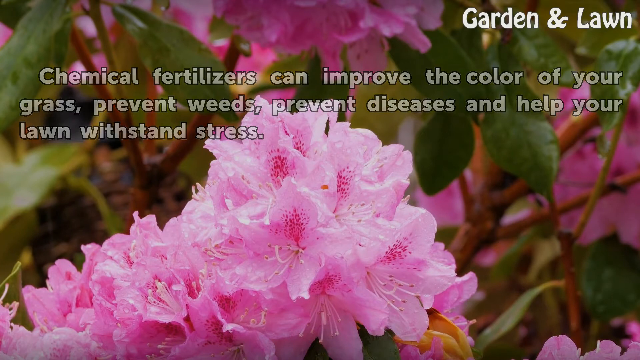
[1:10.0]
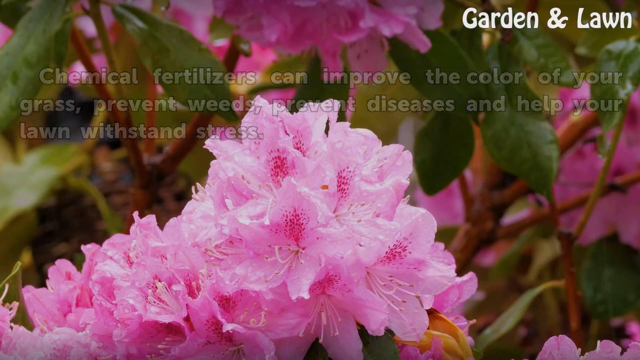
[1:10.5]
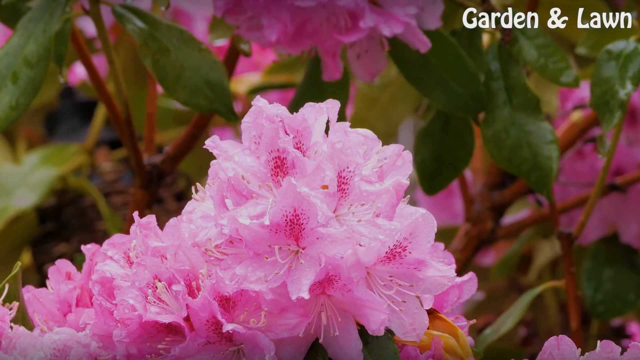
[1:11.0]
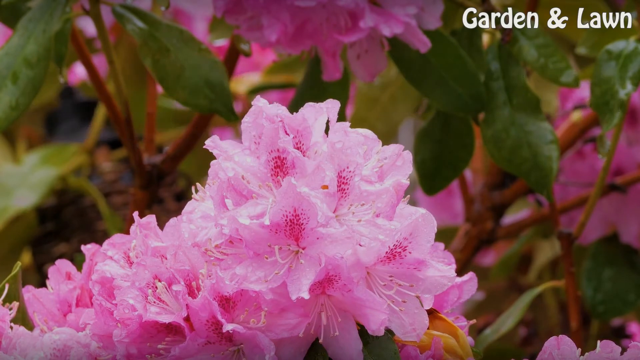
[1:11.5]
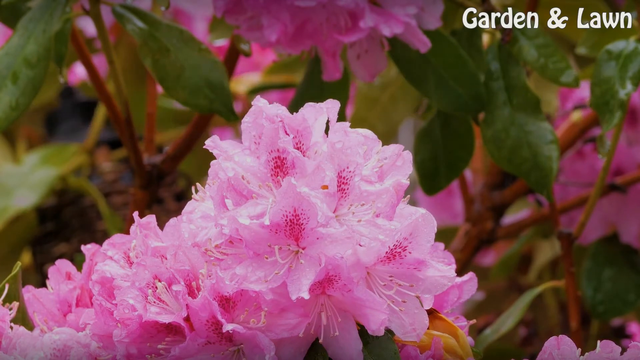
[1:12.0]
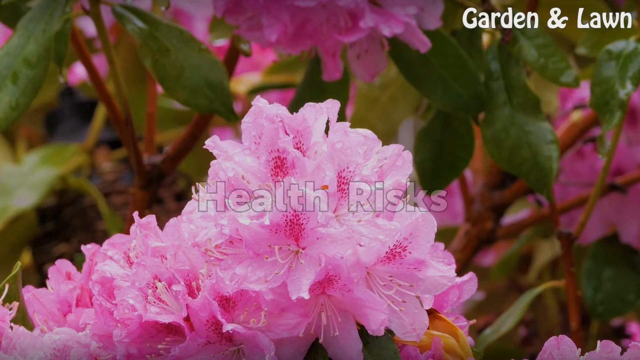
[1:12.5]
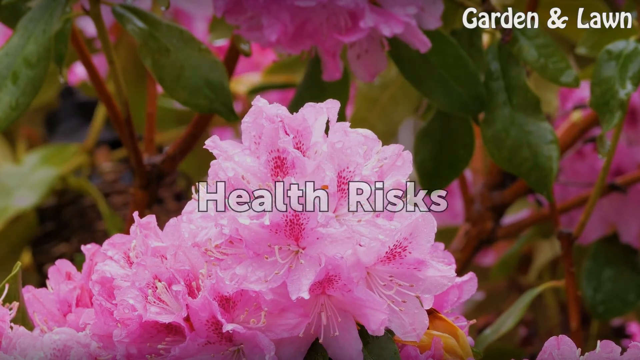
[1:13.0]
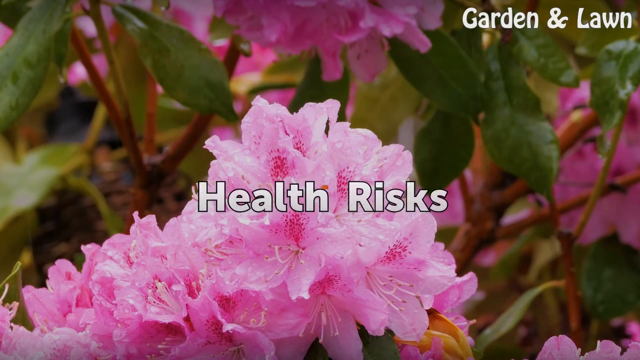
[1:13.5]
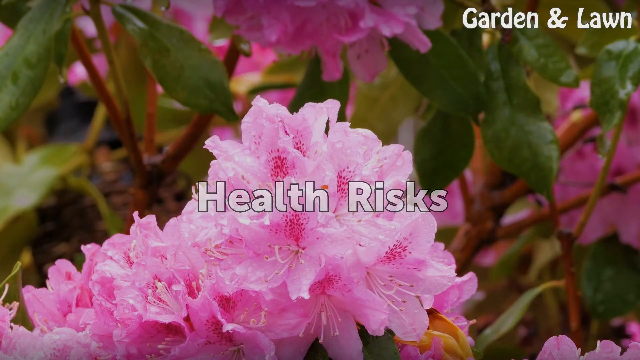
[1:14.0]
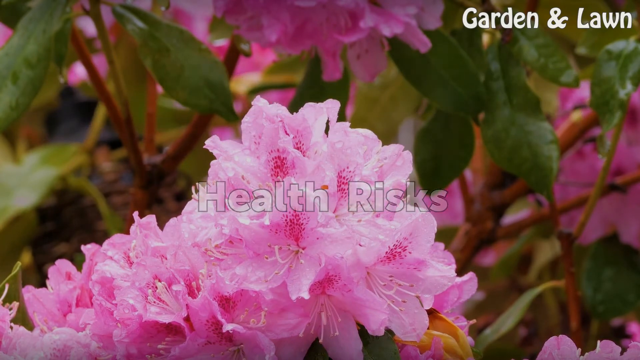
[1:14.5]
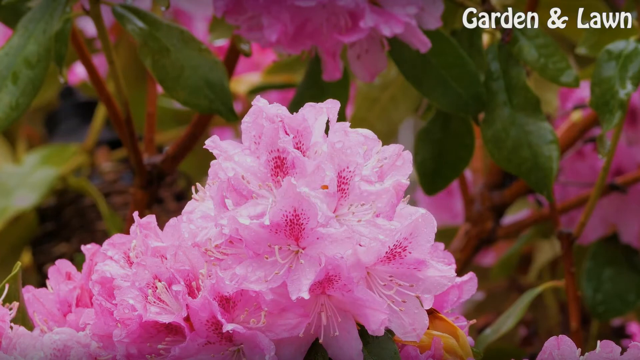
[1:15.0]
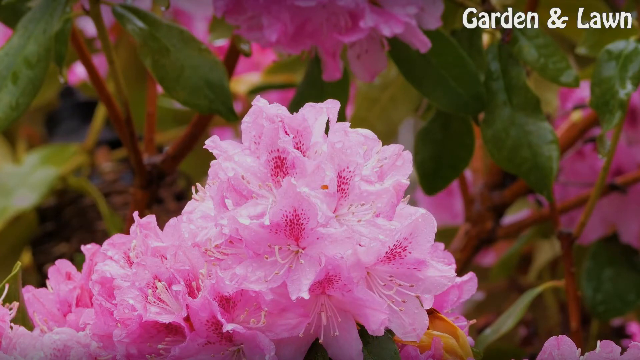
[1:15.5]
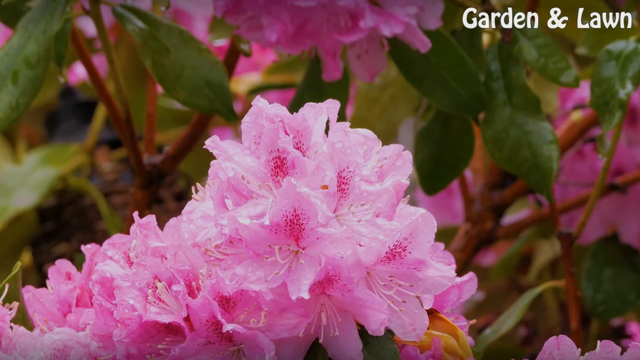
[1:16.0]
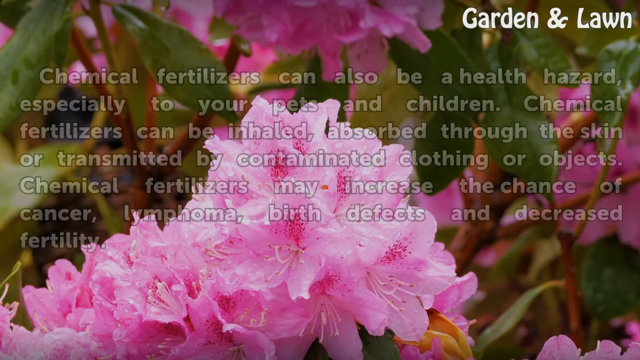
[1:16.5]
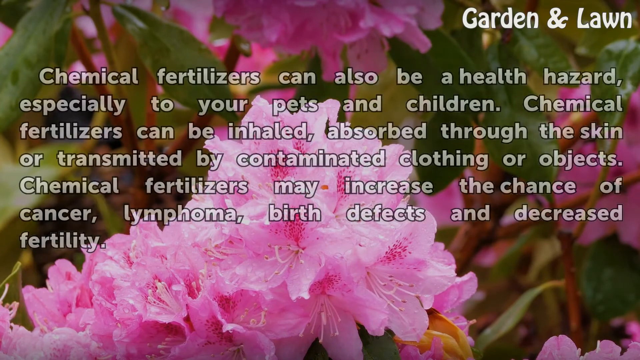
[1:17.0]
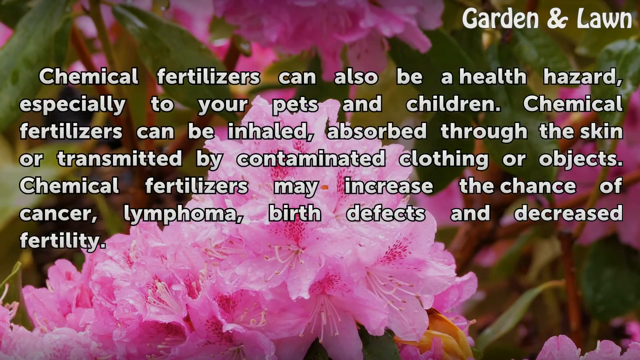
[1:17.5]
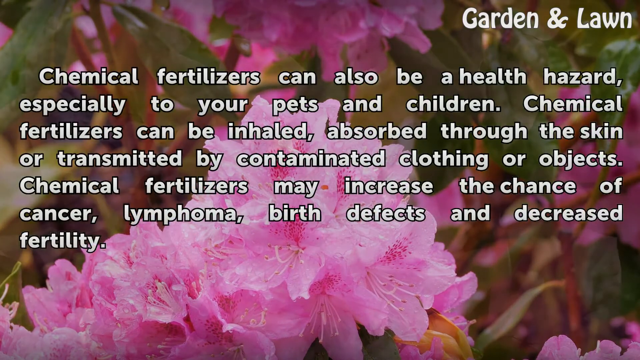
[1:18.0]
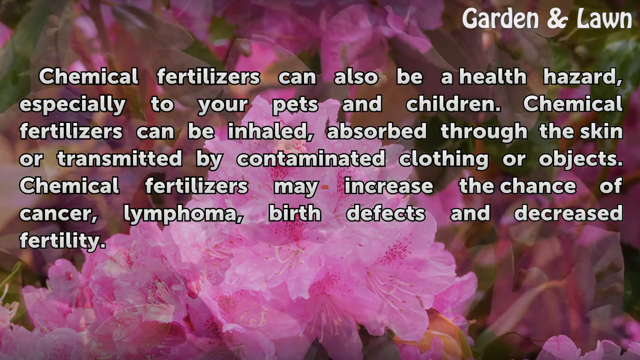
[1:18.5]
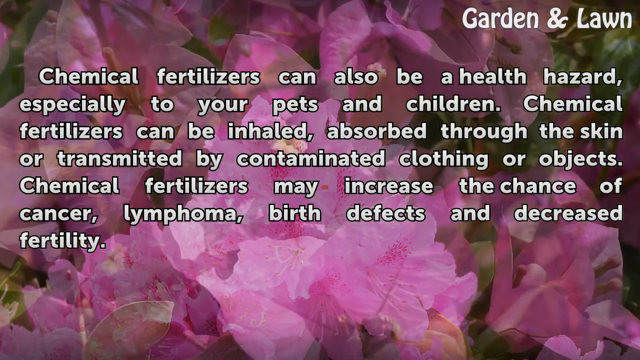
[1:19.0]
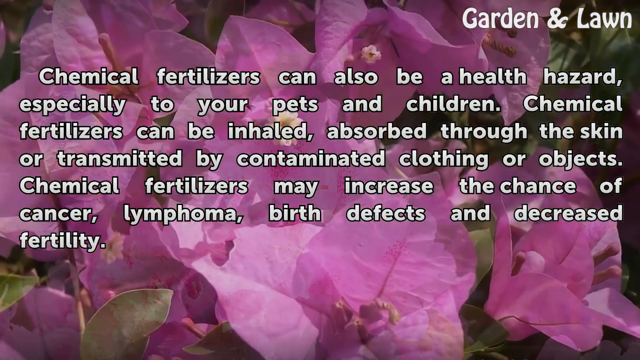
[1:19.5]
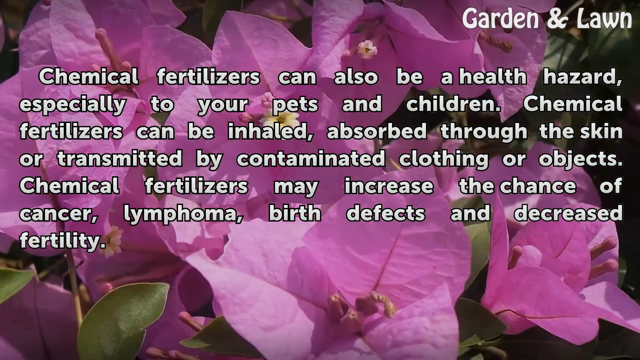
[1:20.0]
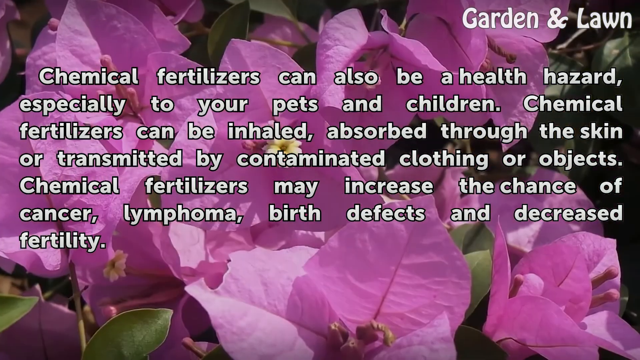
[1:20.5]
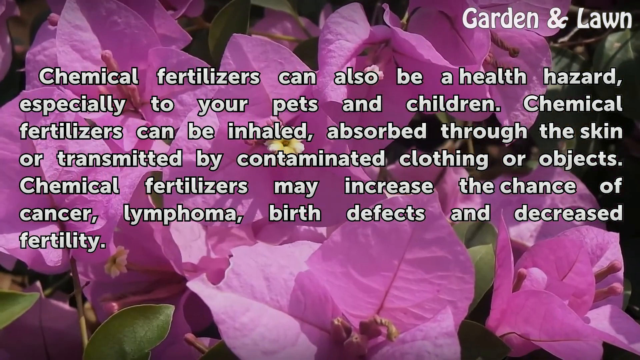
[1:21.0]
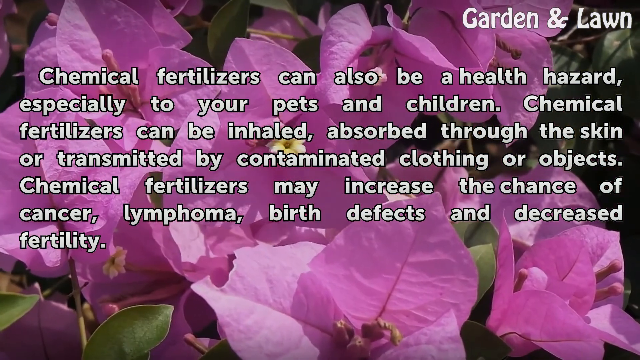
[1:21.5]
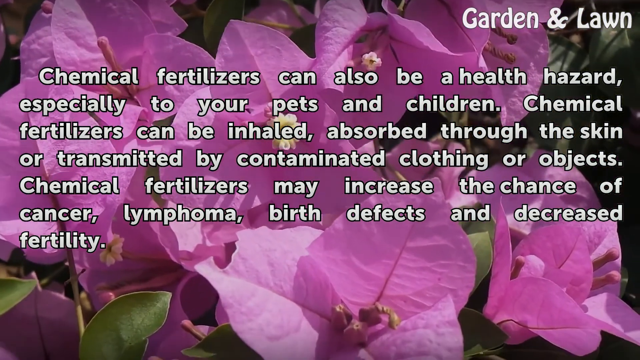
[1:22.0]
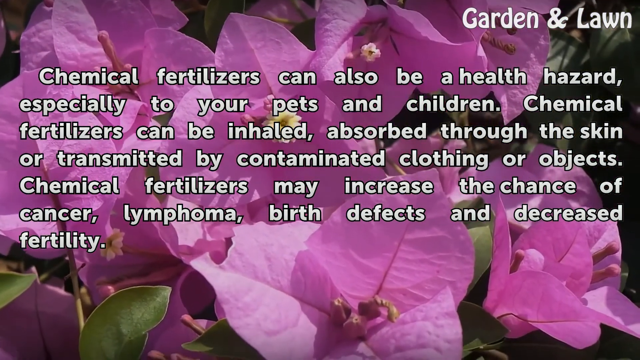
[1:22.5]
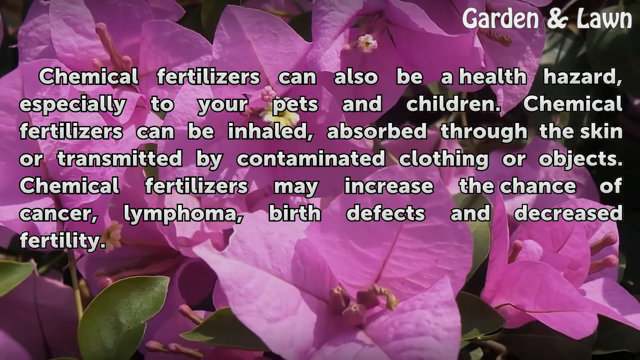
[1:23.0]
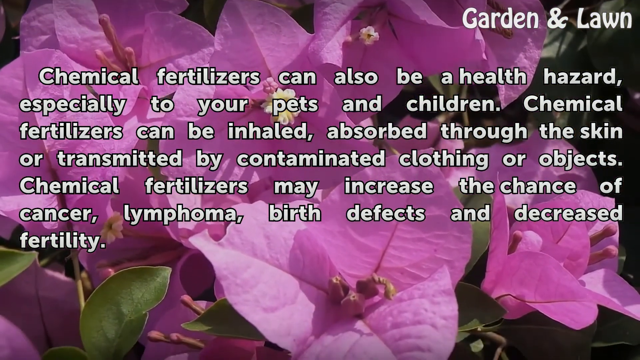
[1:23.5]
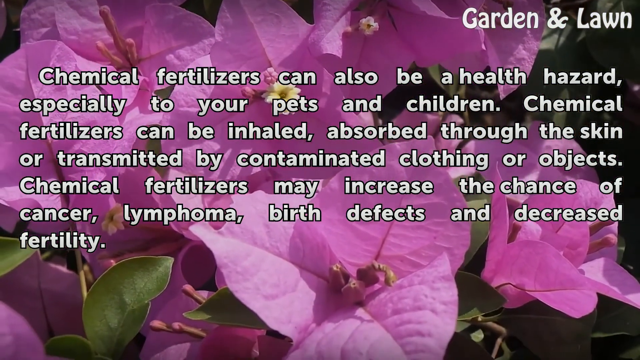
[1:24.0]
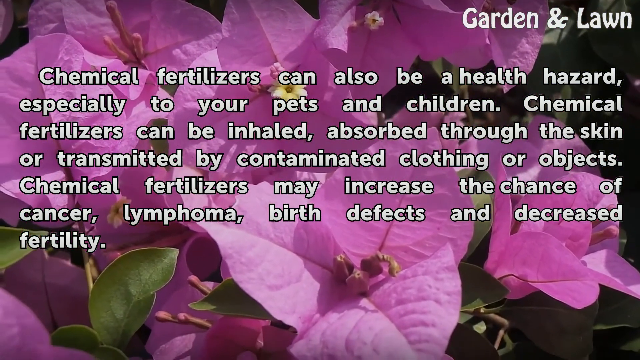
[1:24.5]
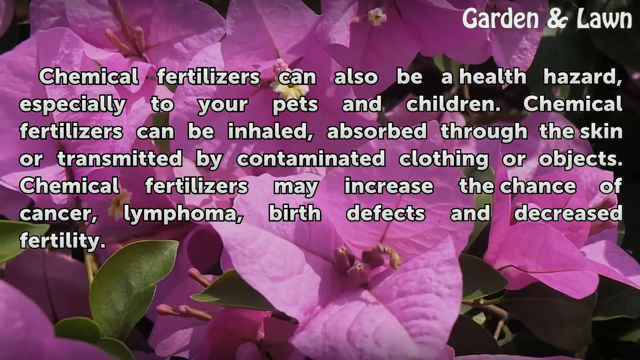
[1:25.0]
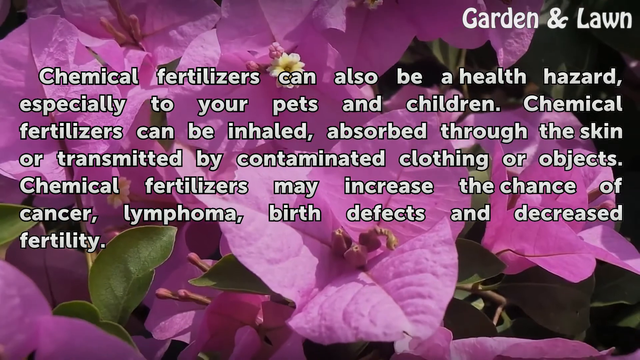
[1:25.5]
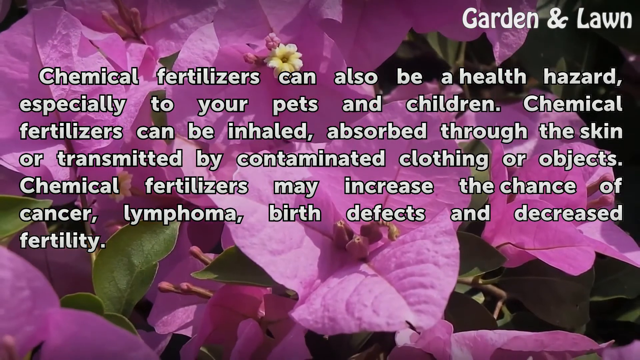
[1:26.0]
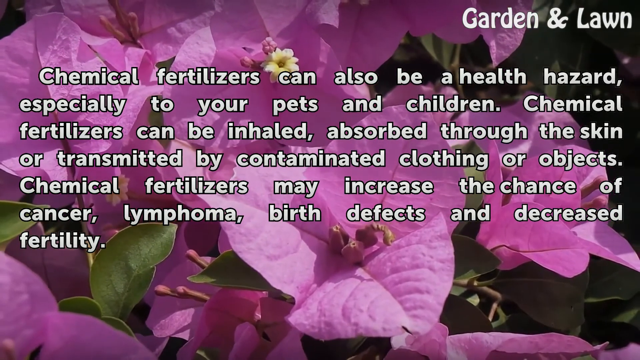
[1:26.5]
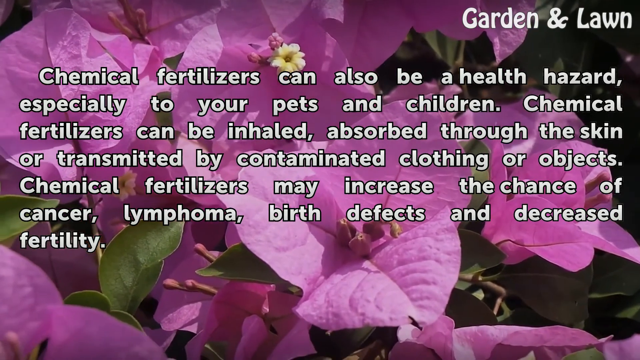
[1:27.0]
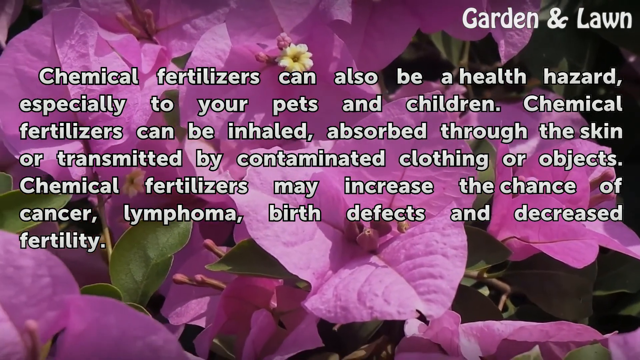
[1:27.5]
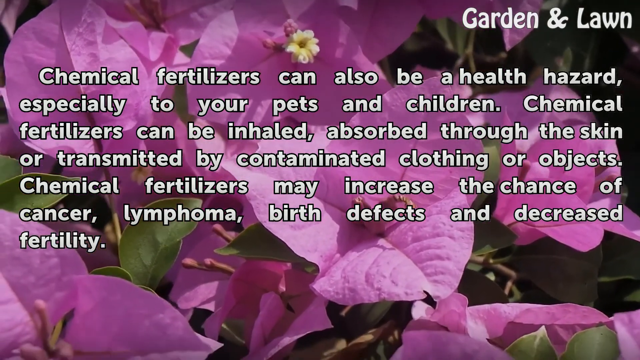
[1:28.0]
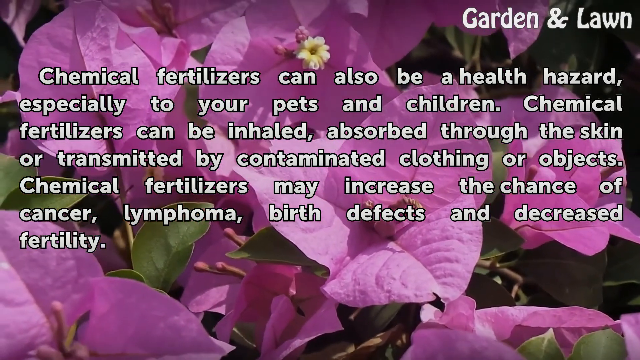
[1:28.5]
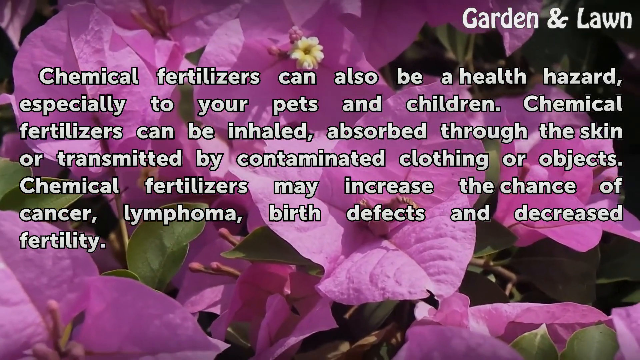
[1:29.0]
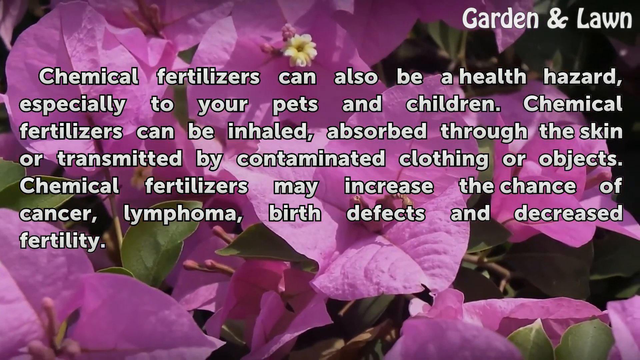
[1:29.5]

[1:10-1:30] The text fades and new text reads "health risks". Then more text appears: "chemical fertilizers can also be a health hazard, especially to your pets and children. Chemical fertilizers can be inhaled, absorbed through the skin or transmitted by contaminated clothing or objects. Chemical fertilizers may increase the chance of cancer, lymphoma, birth defects and decreased fertility." The background changes to two large pink flowers with sunlight and shadows on them, gently shaking and moving in the wind.